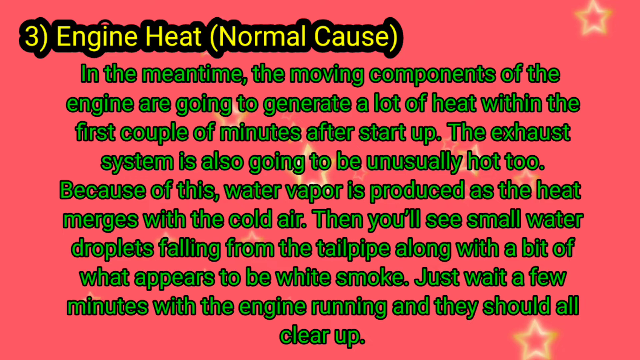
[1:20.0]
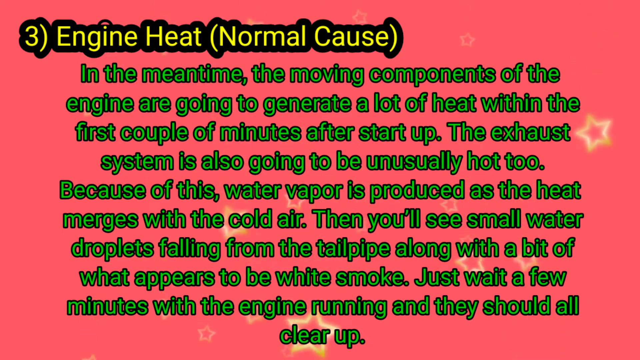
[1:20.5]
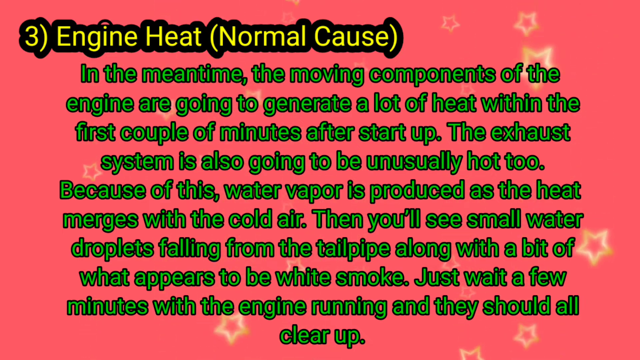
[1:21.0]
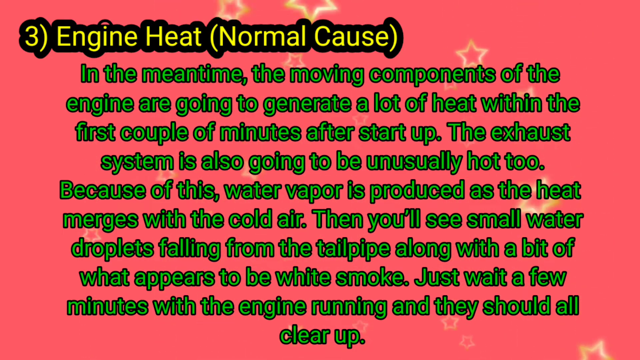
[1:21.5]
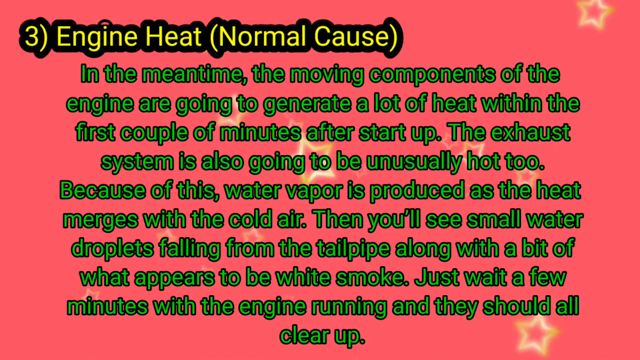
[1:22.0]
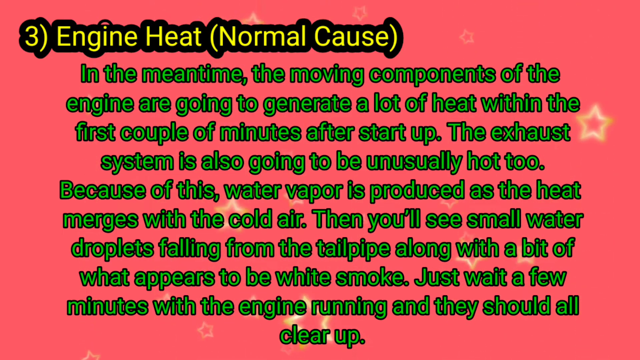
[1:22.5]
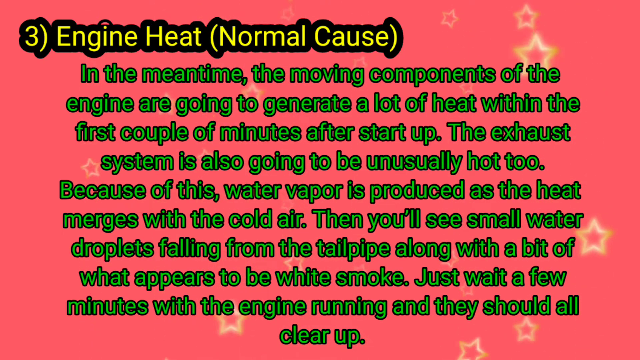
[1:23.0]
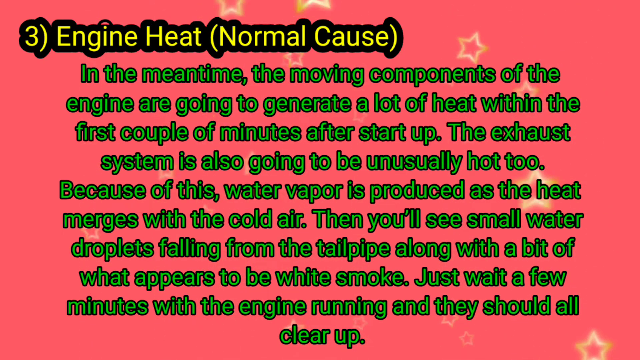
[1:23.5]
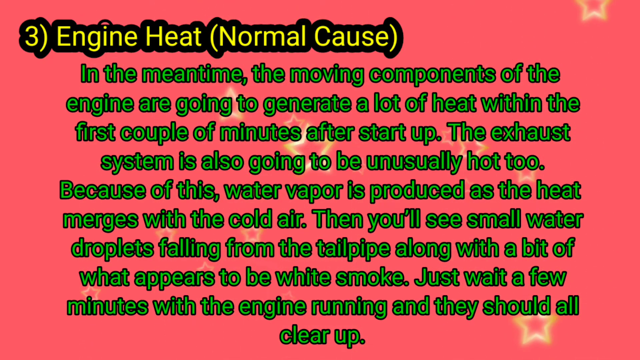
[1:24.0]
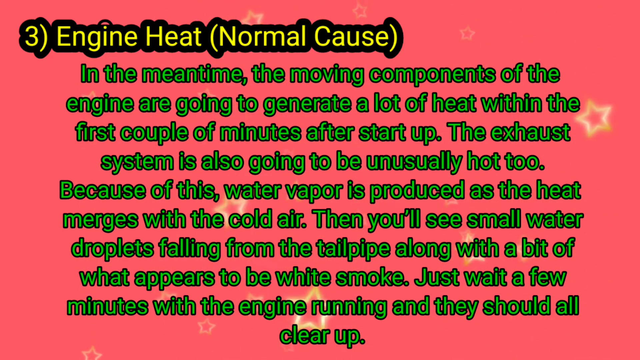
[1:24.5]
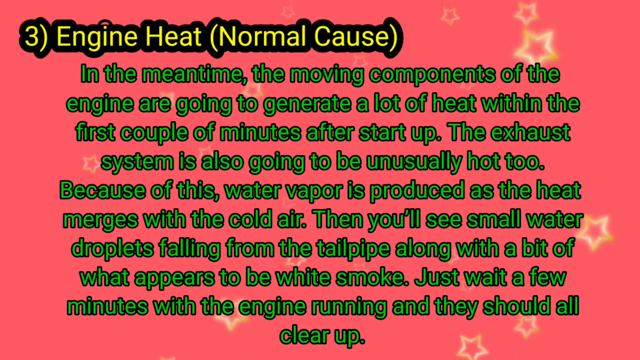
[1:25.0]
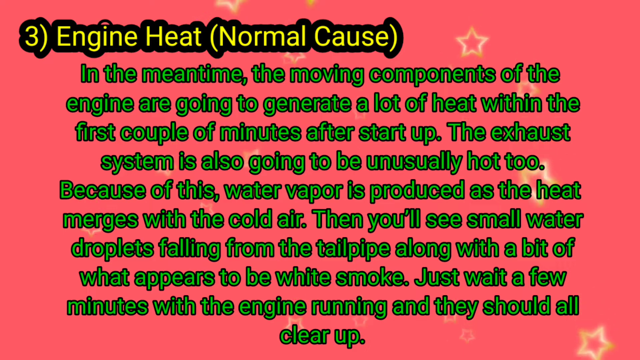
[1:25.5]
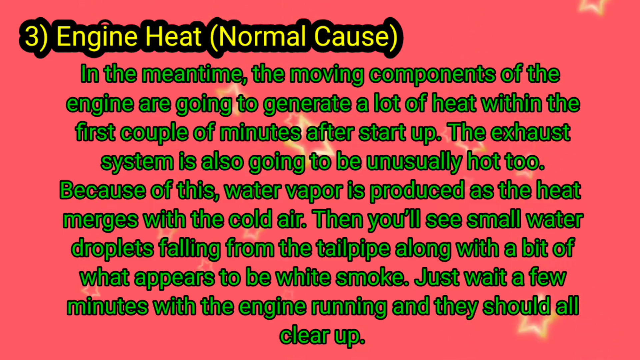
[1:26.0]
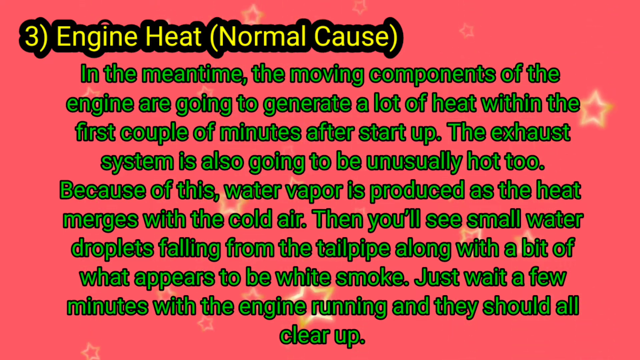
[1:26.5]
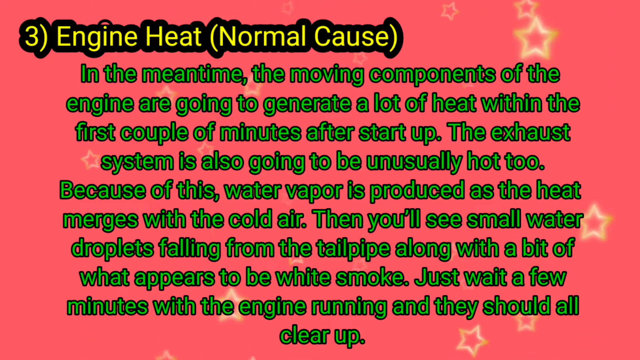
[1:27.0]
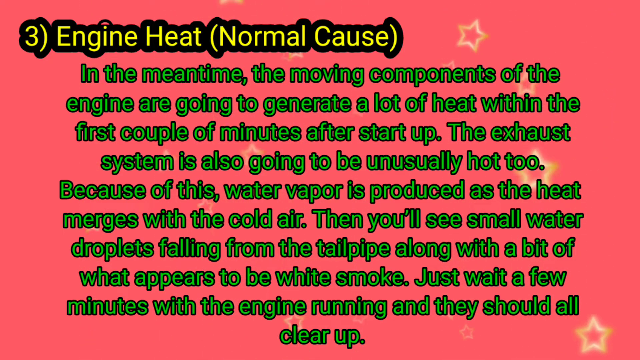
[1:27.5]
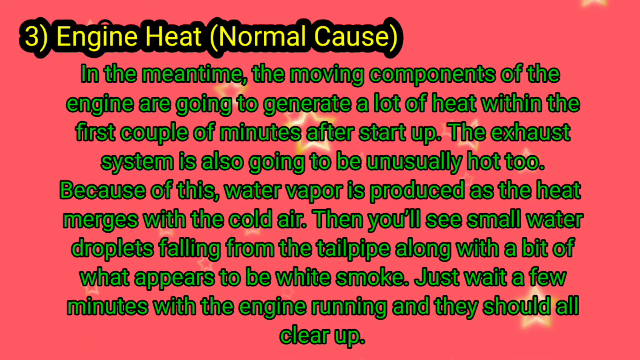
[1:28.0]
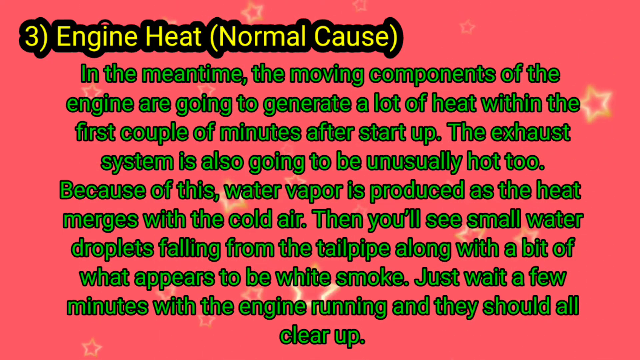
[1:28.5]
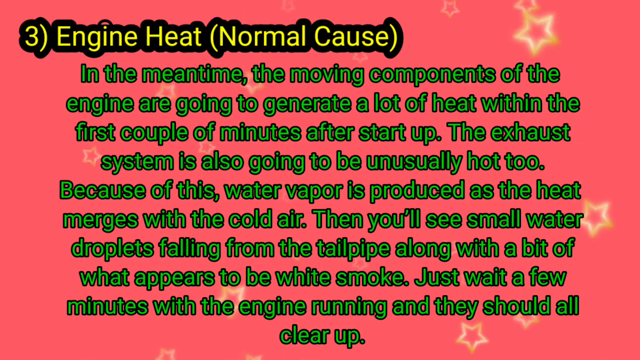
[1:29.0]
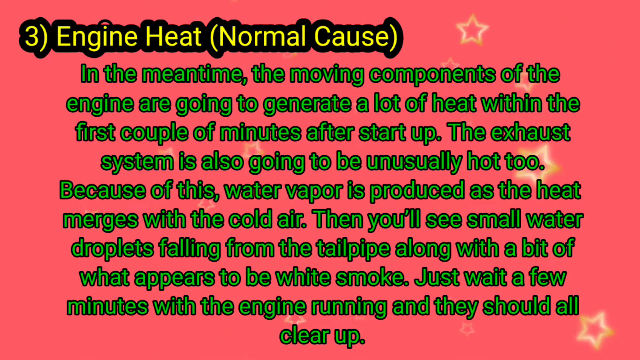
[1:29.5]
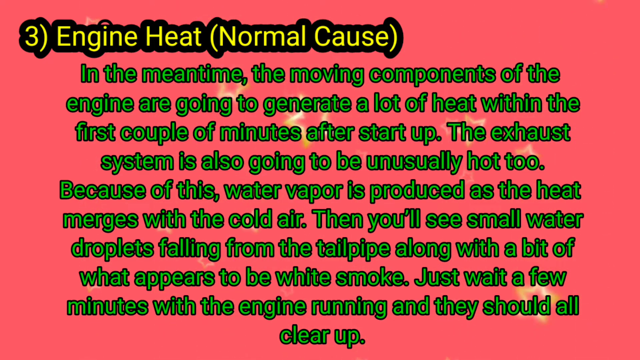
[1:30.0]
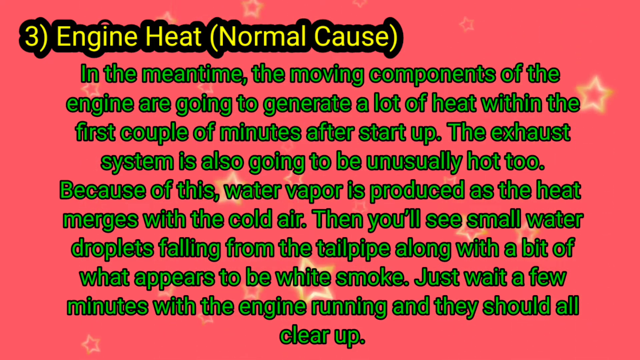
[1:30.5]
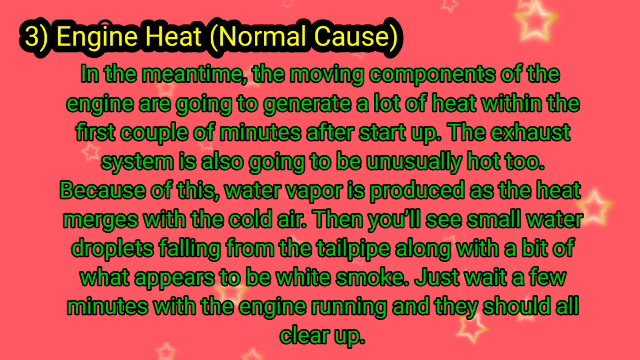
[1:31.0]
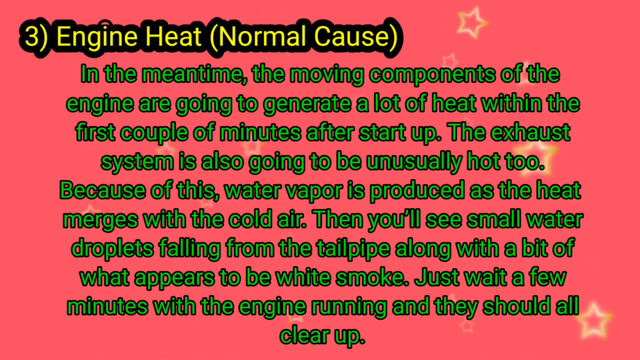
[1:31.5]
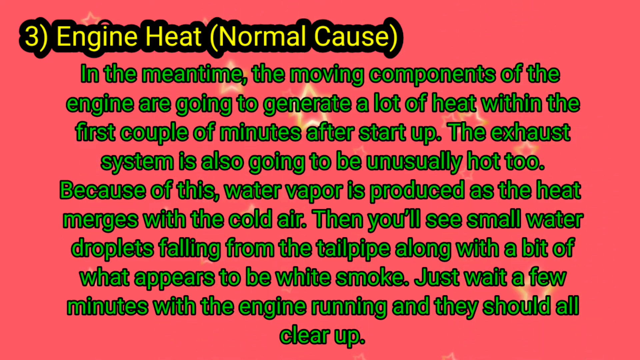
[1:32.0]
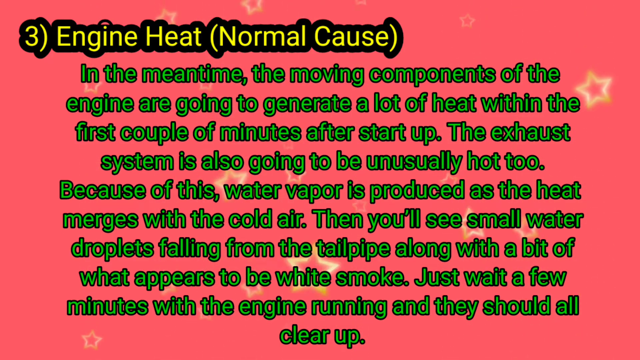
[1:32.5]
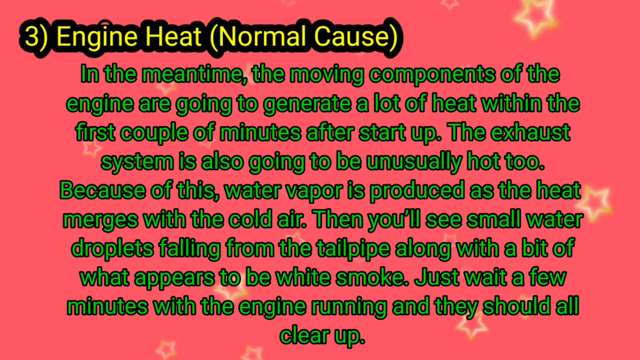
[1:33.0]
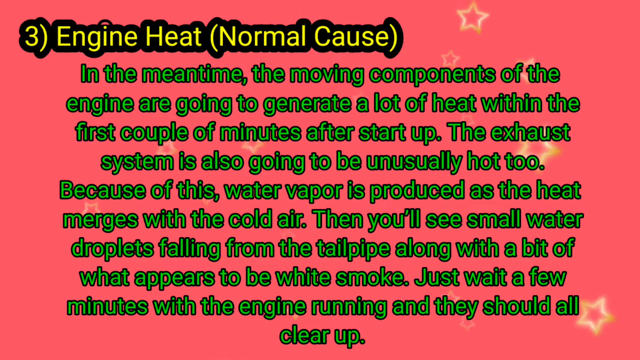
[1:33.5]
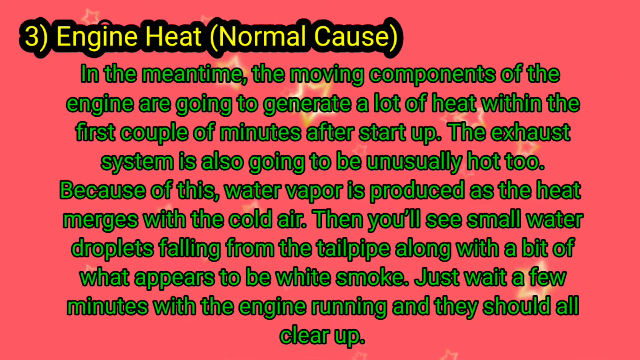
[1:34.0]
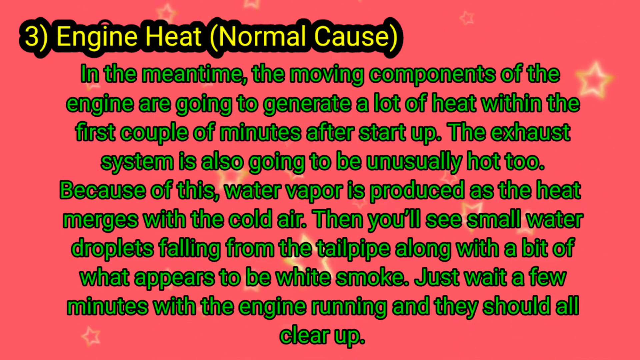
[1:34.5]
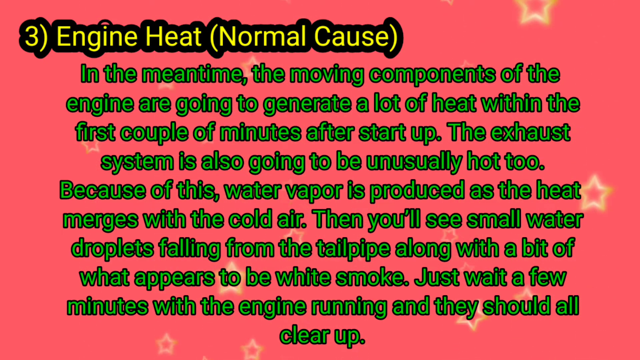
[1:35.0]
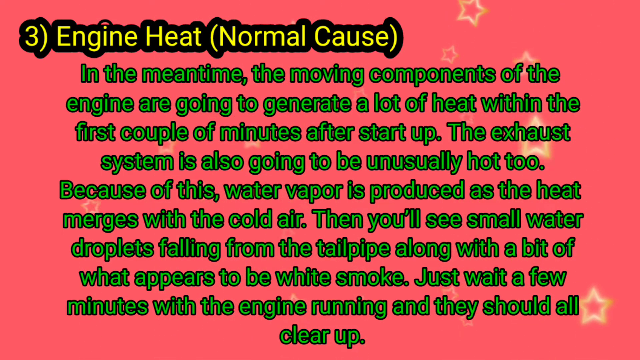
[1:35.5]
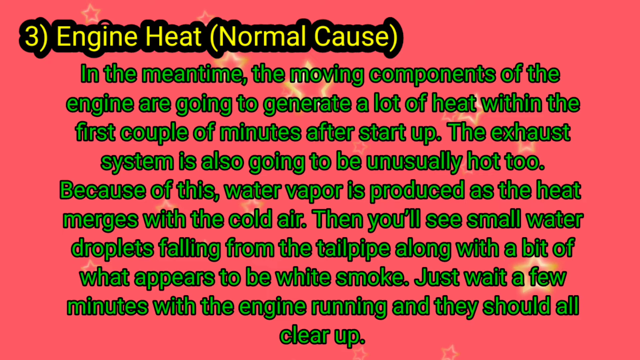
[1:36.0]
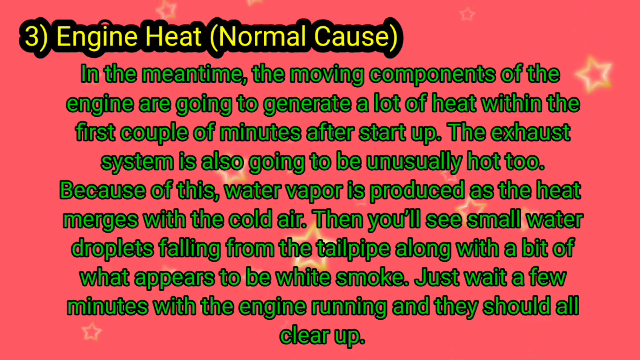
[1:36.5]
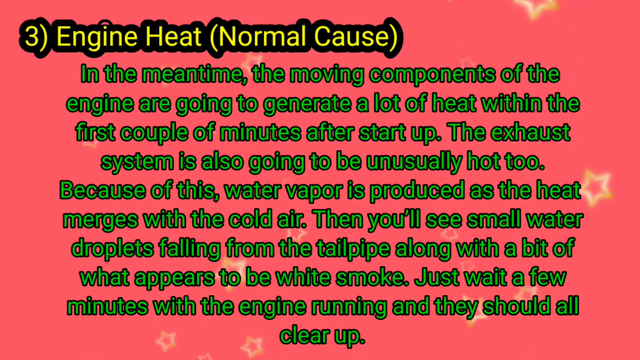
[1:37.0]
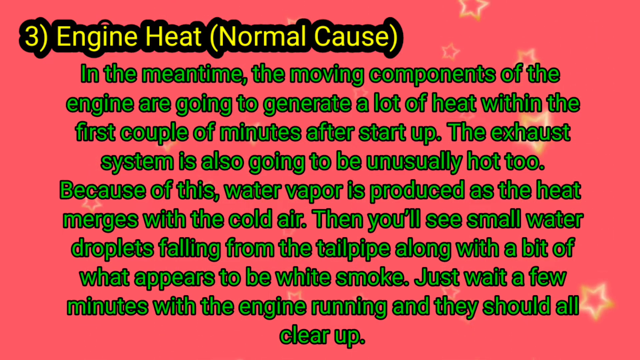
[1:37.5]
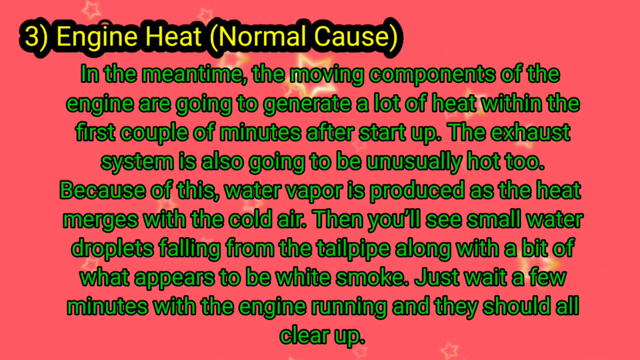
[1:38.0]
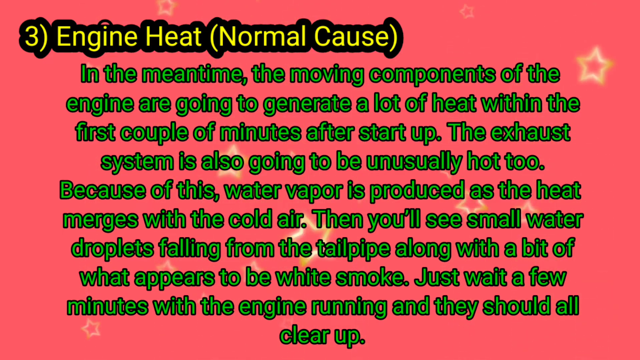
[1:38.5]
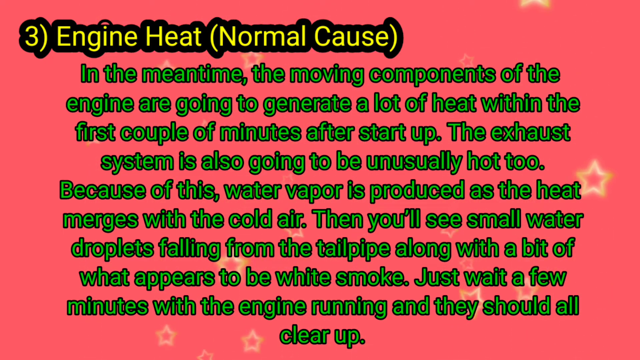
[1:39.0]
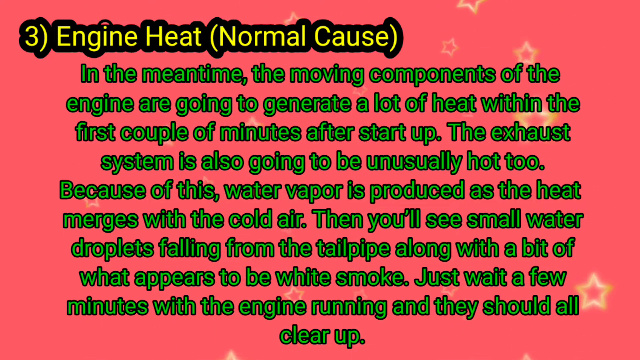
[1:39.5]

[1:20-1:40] Yellow stars fall from the top over the pink background. Yellow lettering at the top reads "three engine heat normal", and the text reads "to generate a lot of heat within the first couple of minutes after startup. Exhaust system is always going to be unusually hot too. Because of this, water vapor is produced as the heat merges with the cold air. Then you'll see small water droplets falling from the tailpipe along with a bit of what appears to be white smoke. Just wait a few minutes with the engine running and they should all clear up." The hollow yellow stars rain down from the left, the center and the right side, sort of like rain on a non-cloudy day. They fall at a brisk pace, coming down like droplets but more spaced out.